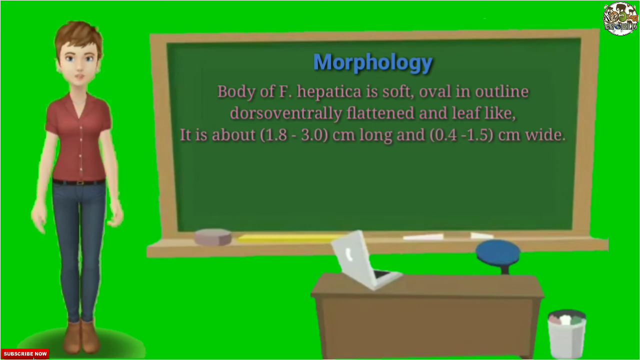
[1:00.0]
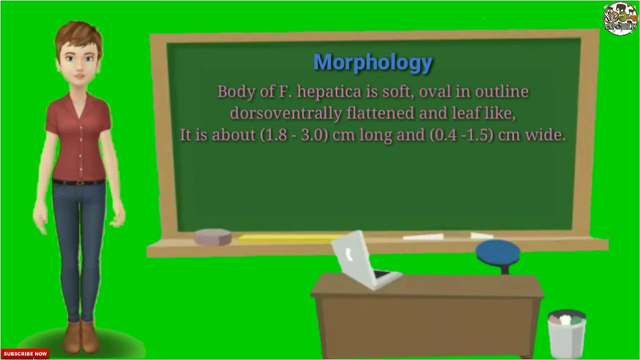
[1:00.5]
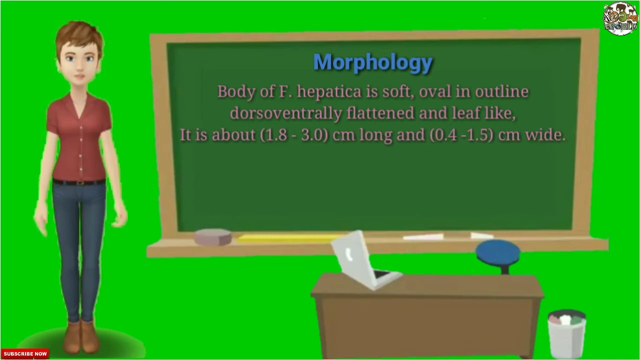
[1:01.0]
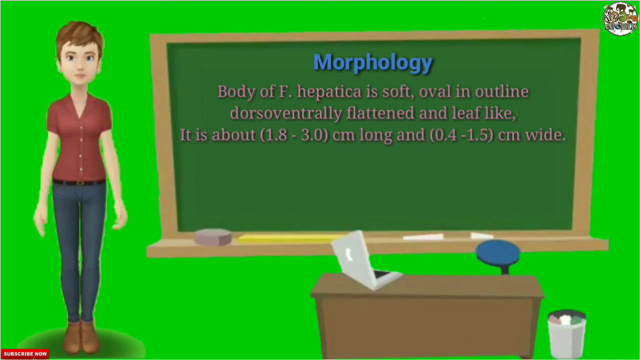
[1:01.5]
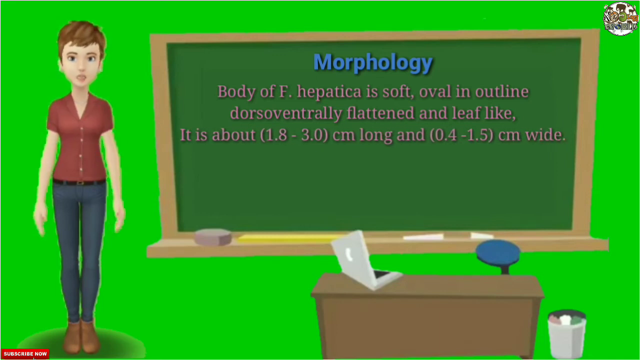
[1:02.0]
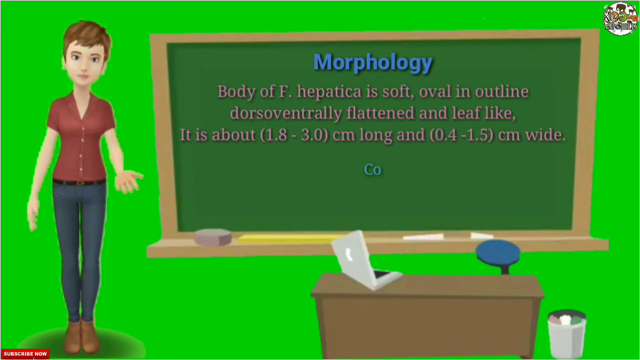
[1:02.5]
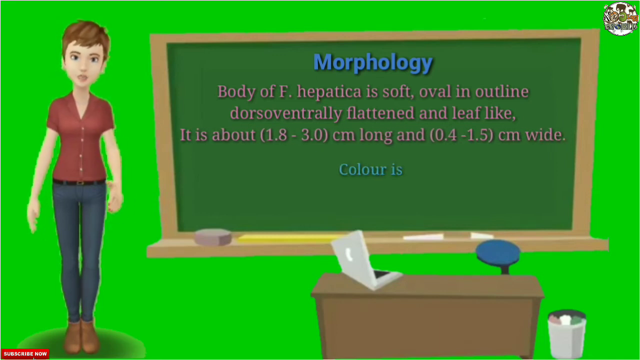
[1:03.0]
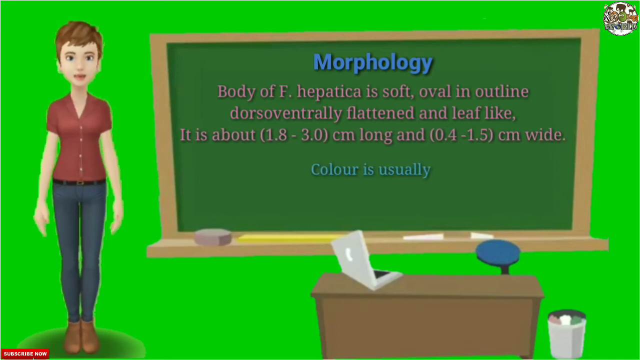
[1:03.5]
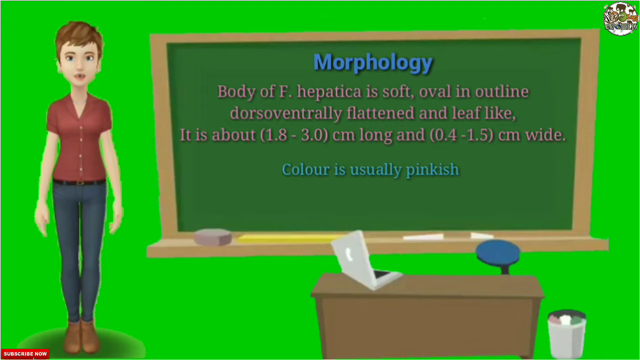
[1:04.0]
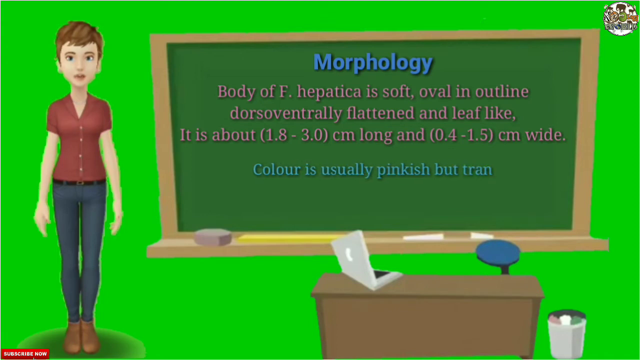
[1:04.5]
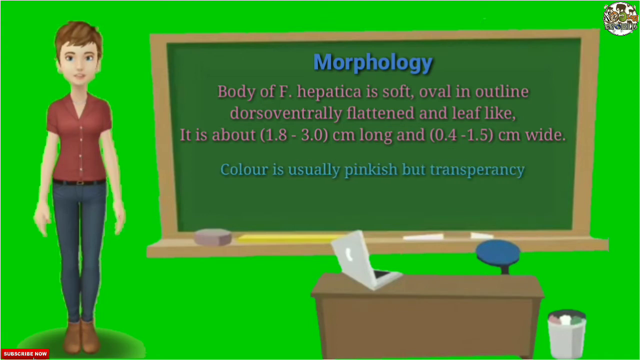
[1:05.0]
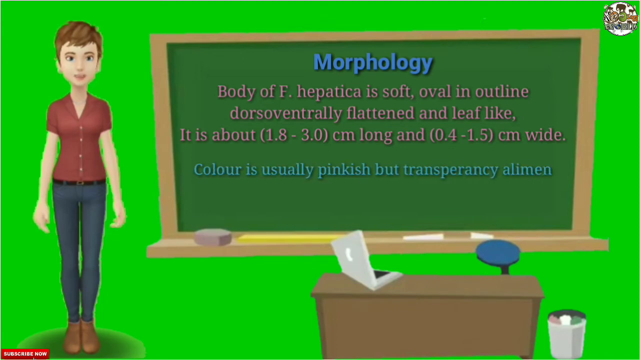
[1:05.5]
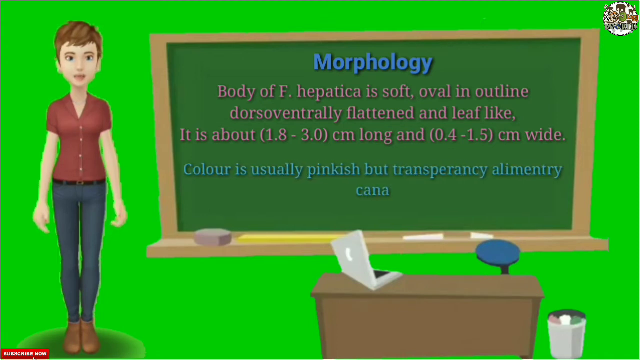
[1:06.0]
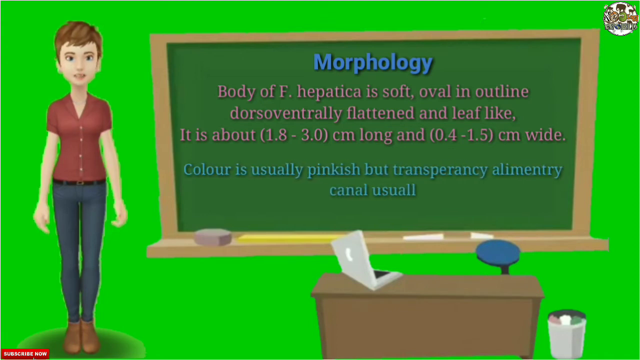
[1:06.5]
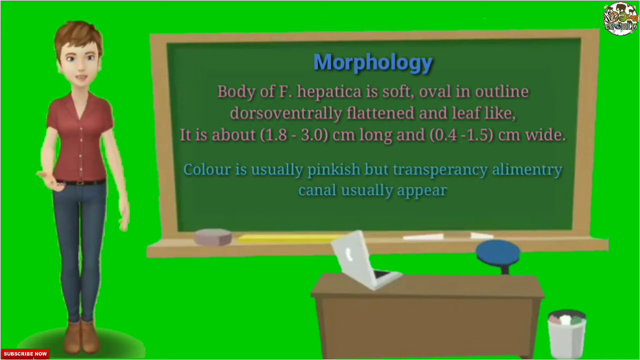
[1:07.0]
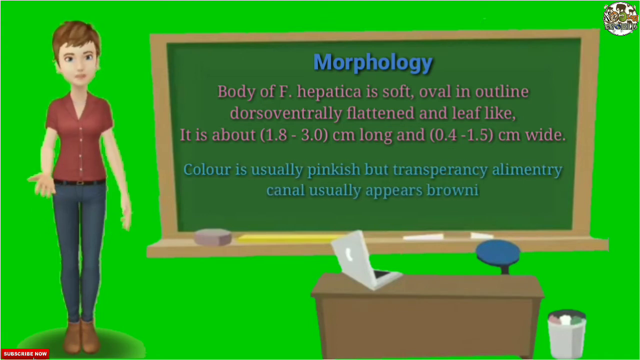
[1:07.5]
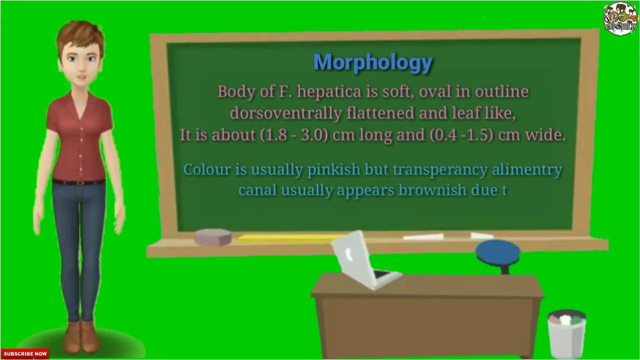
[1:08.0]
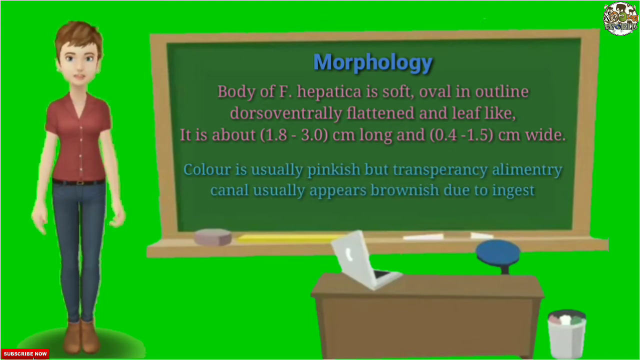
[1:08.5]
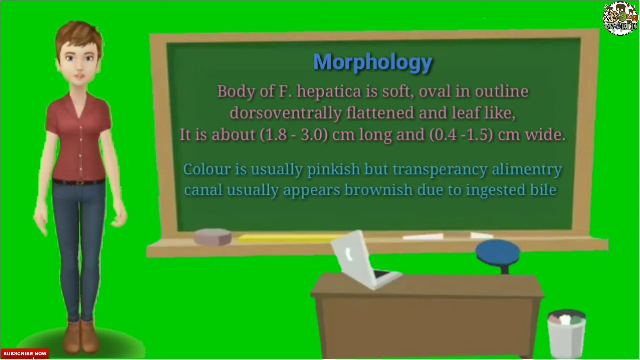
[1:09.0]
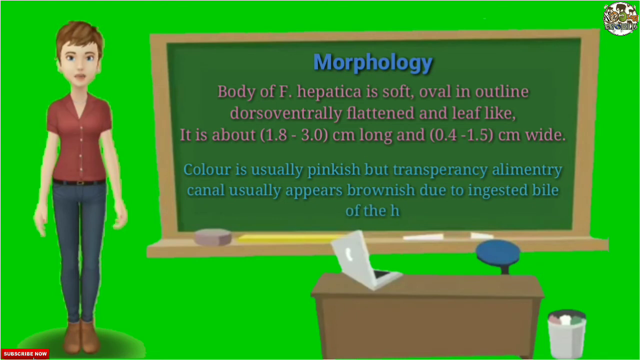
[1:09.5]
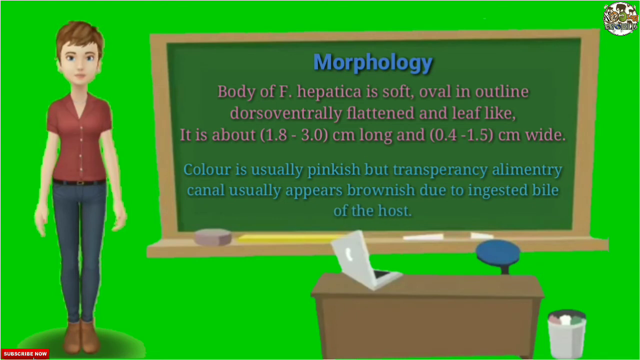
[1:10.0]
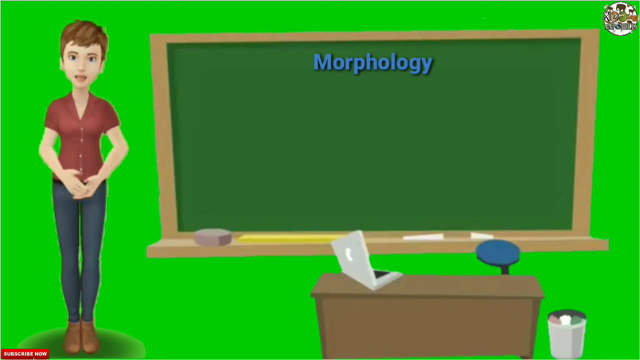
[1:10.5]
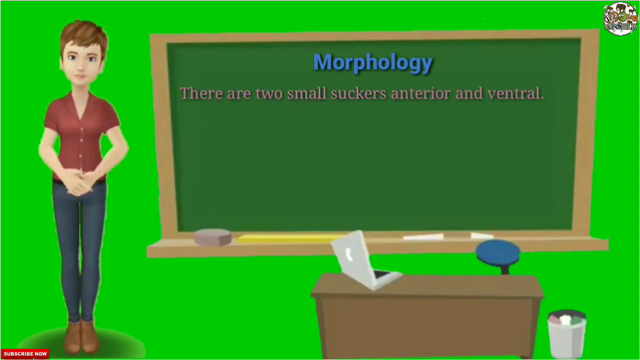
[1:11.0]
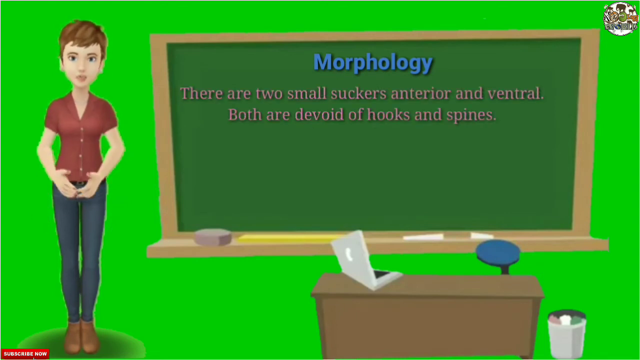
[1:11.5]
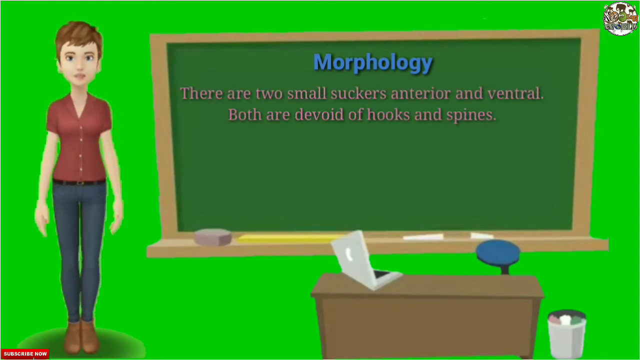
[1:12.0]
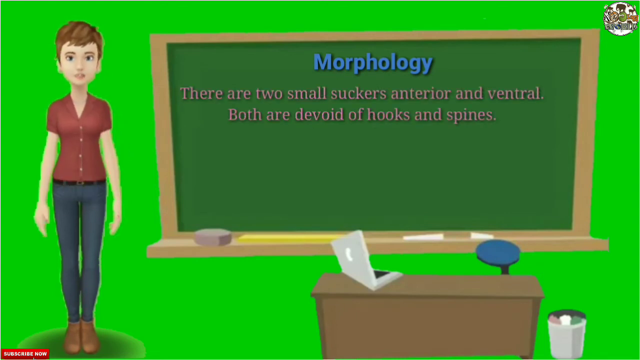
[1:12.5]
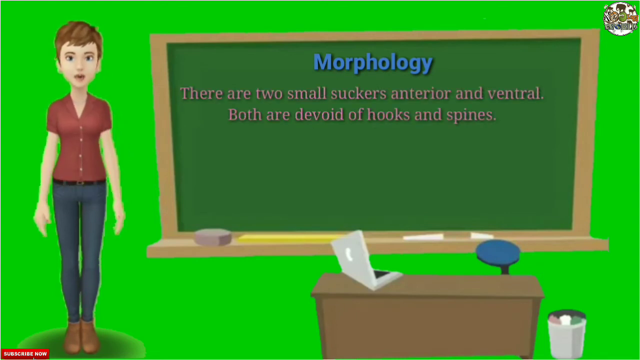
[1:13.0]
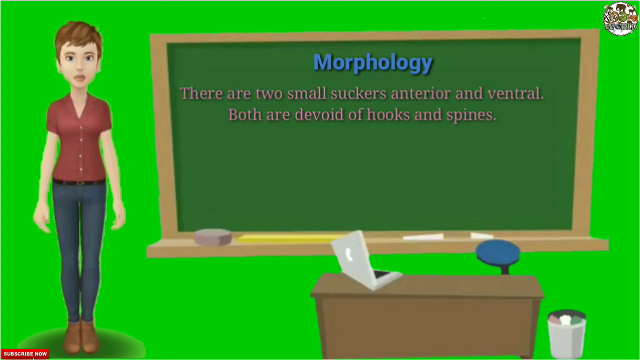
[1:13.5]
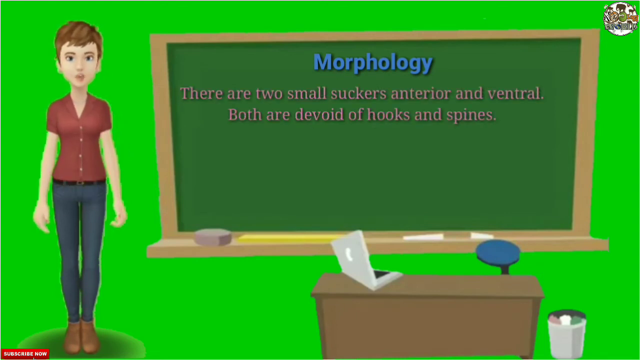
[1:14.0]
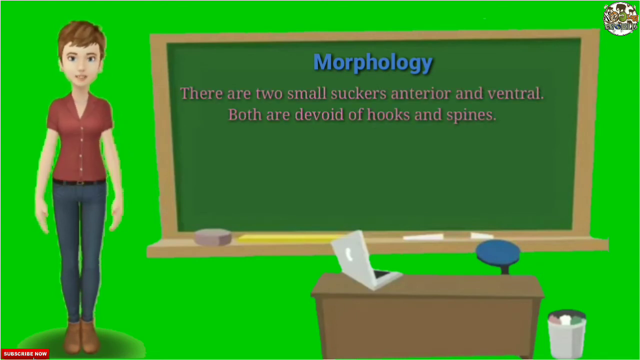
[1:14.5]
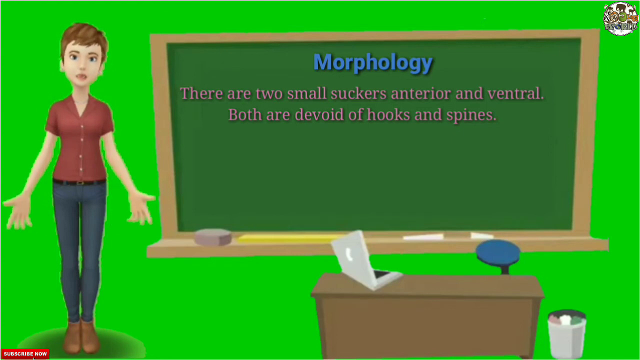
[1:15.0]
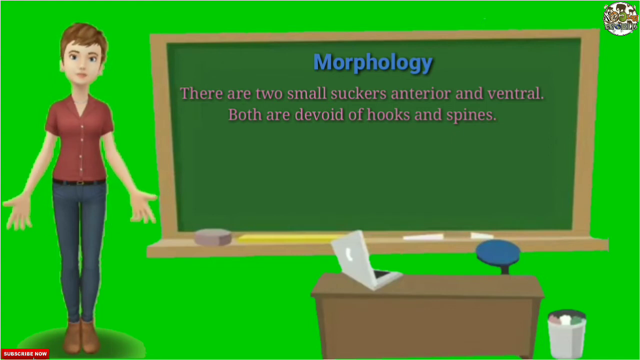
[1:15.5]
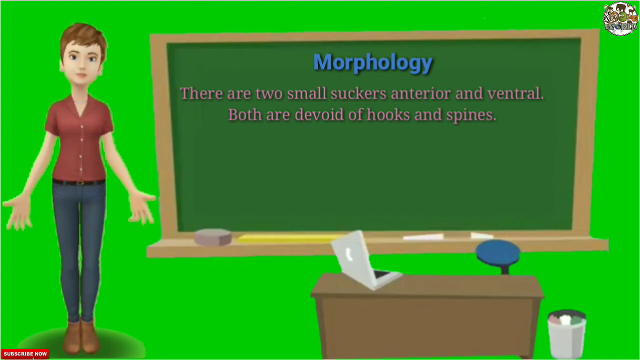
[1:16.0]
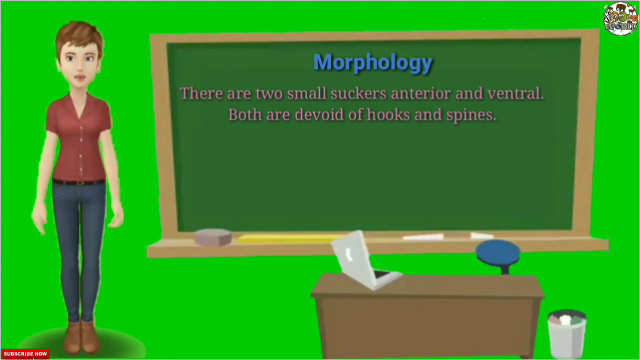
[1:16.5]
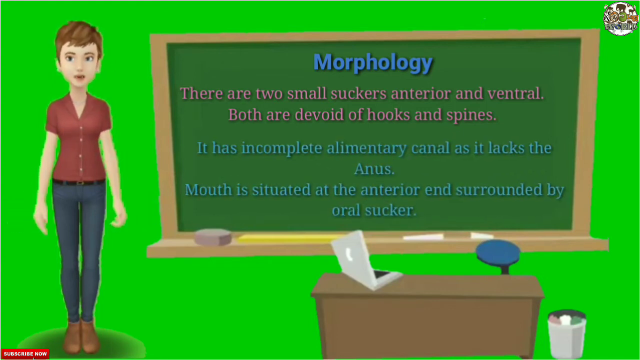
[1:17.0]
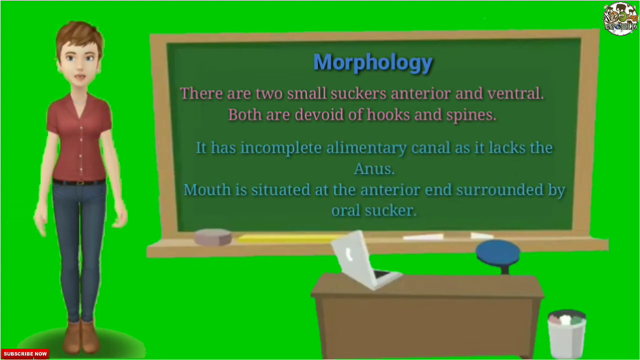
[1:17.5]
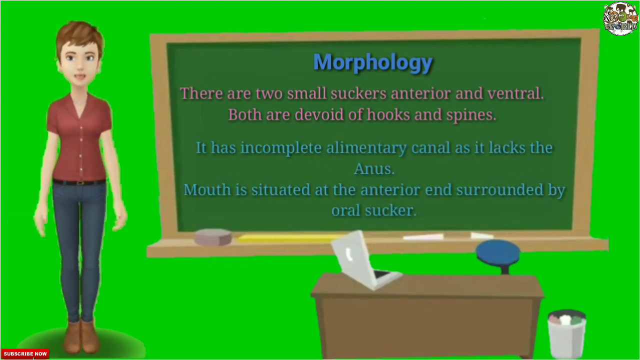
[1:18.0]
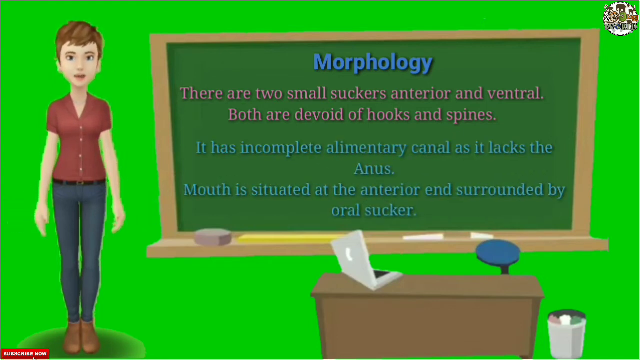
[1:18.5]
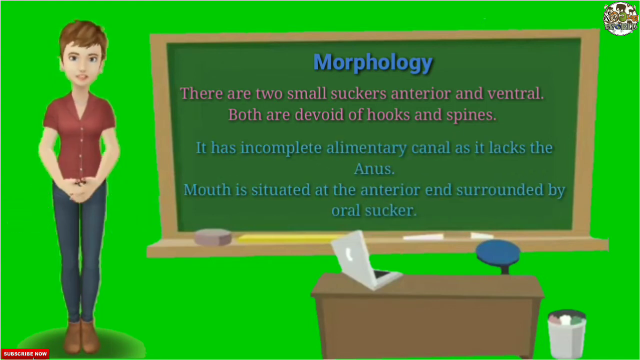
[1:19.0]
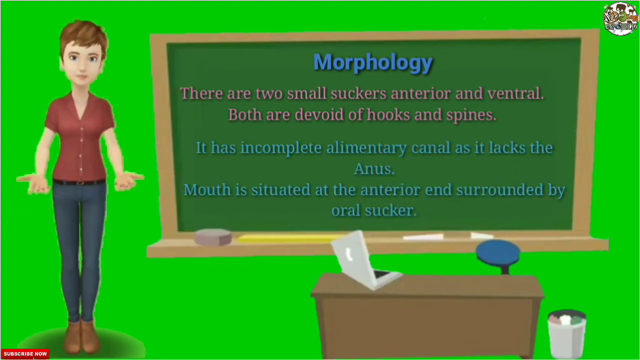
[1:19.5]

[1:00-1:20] Below the pink text, blue text appears reading "body of F. hepatica is soft, oval in outline, dorsal ventrally flattened and leaf-like it is about 1.8 to 3 centimeters long and 0.4 to 1.5 centimeters wide." More blue text reads "color is usually pinkish but transparency elementary canal usually appears brownish due to ingested bile of the host." The blackboard is then cleared except for the "morphology" heading, and new pink text appears: "there are two small suckers anterior and ventral both are devoid of hooks and spines." The animated teacher on the left side of the screen presents the information as it is generated on the blackboard. More blue text appears below, reading "it has incomplete elementary canal as it lacks the anus. The mouth is situated at the anterior end surrounded by oral sucker."